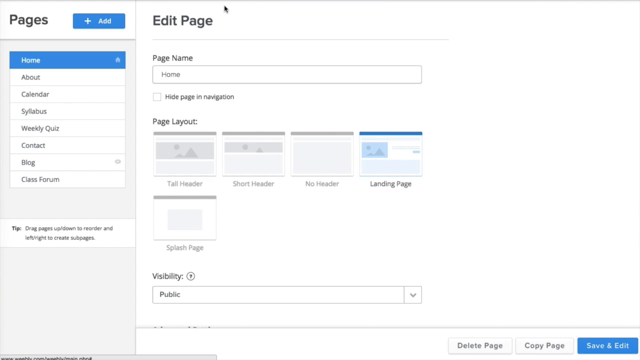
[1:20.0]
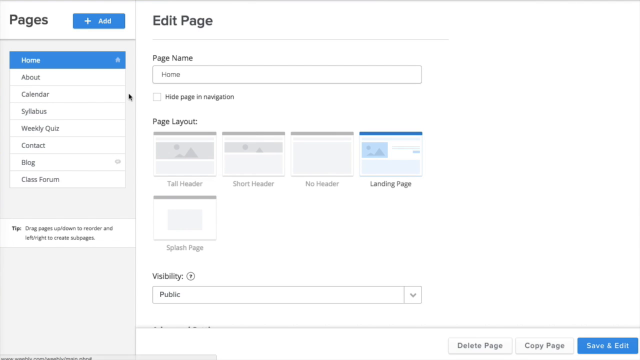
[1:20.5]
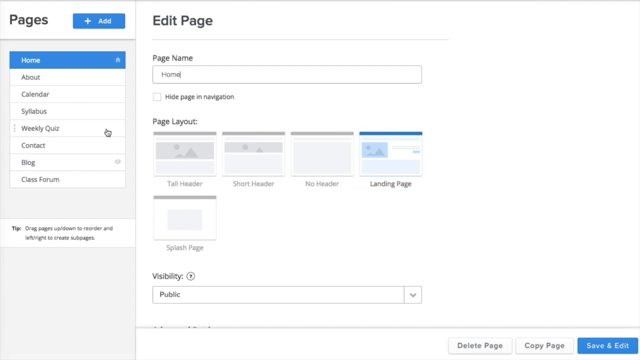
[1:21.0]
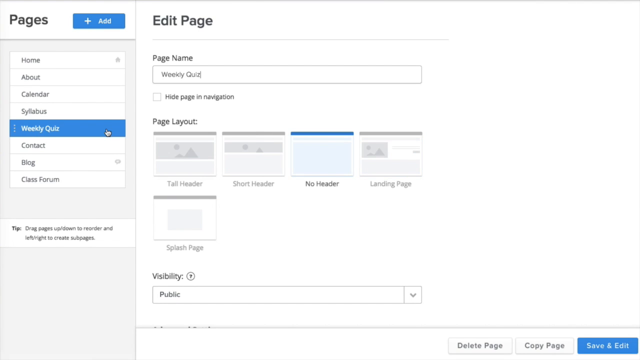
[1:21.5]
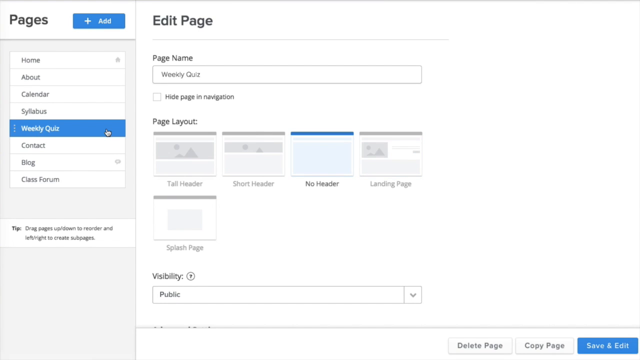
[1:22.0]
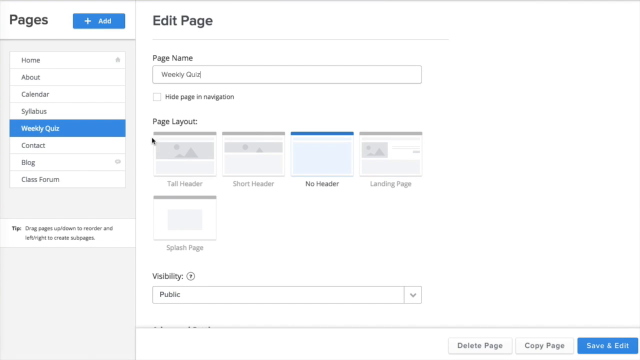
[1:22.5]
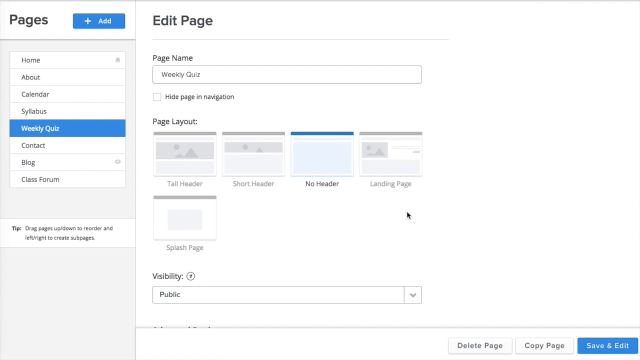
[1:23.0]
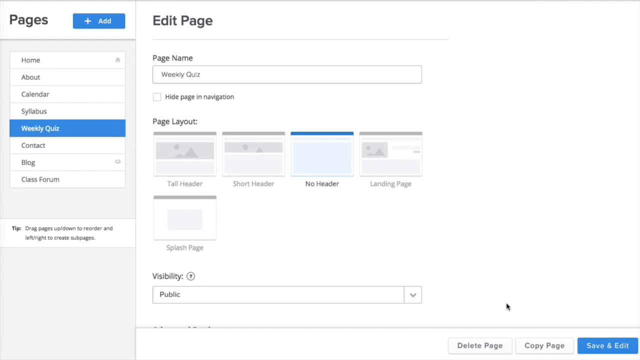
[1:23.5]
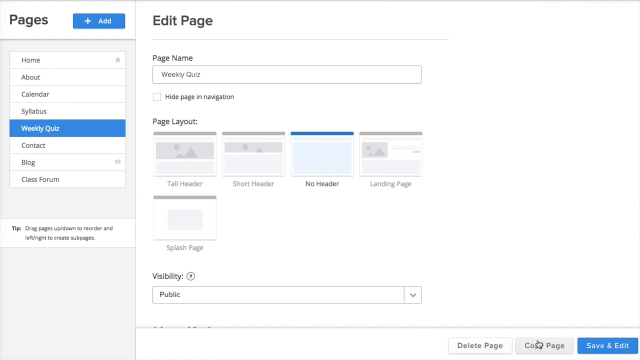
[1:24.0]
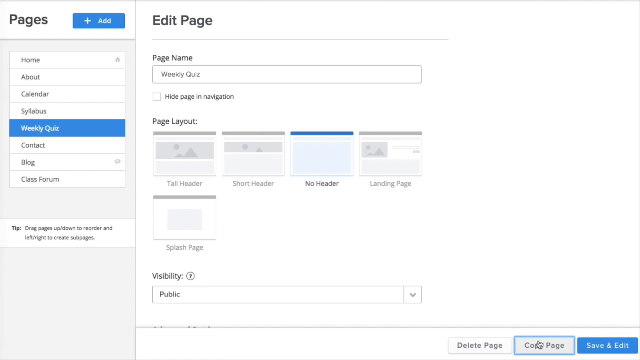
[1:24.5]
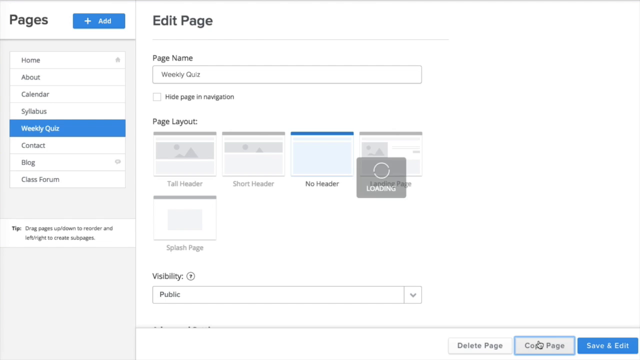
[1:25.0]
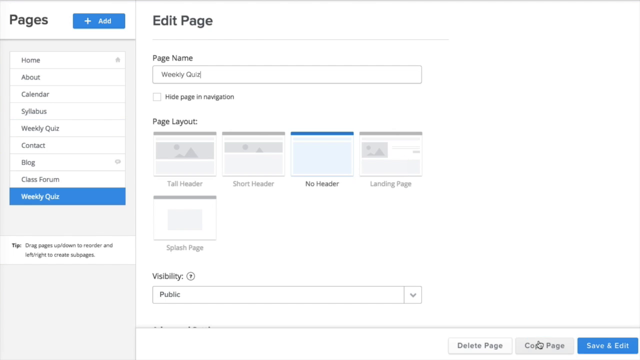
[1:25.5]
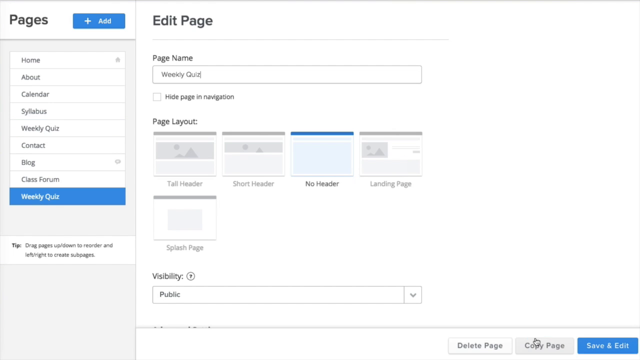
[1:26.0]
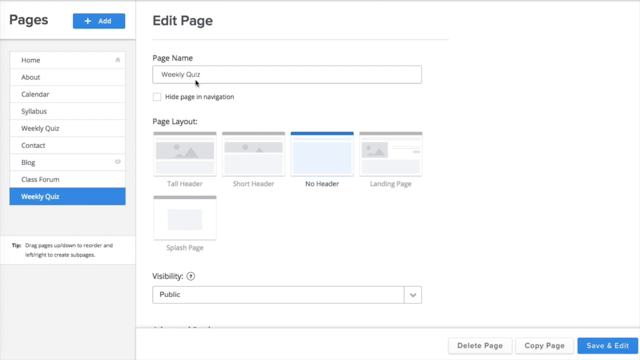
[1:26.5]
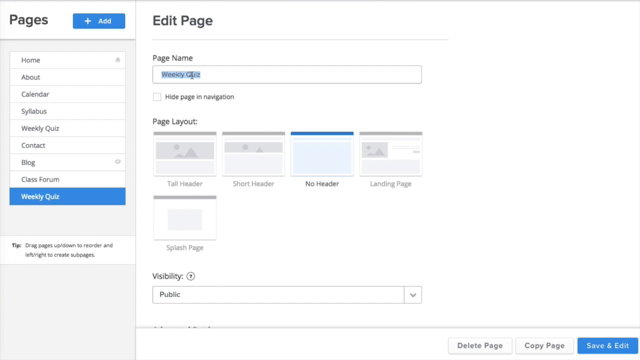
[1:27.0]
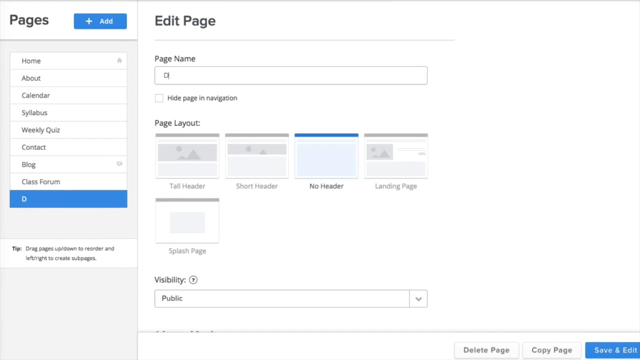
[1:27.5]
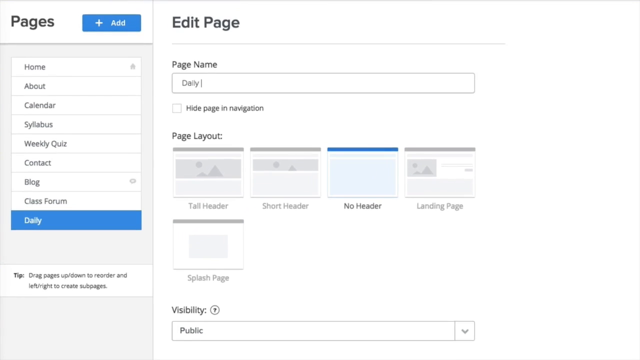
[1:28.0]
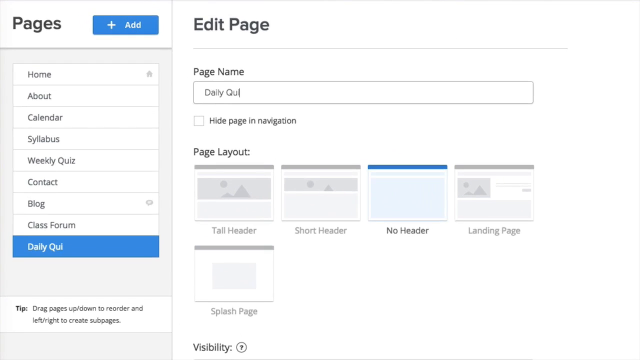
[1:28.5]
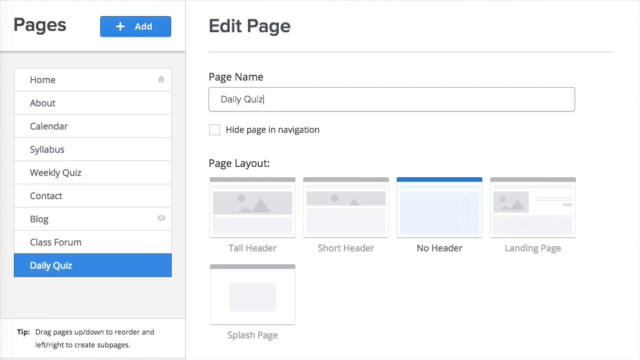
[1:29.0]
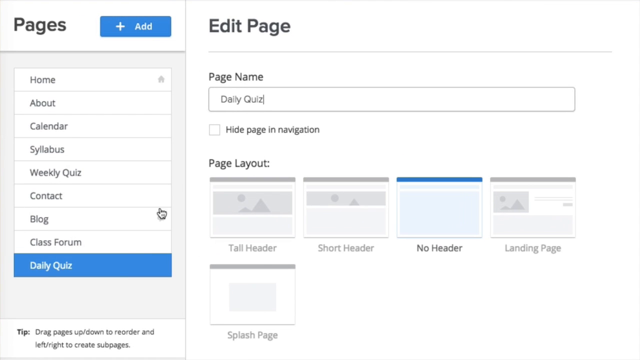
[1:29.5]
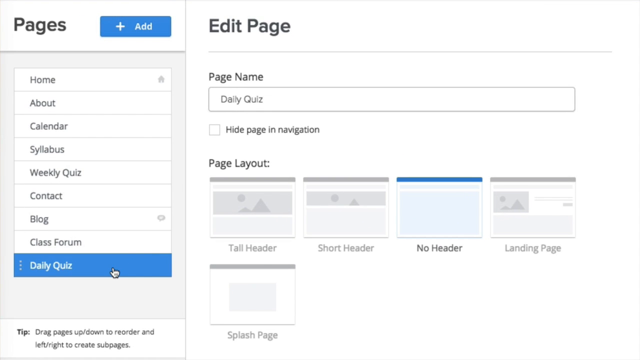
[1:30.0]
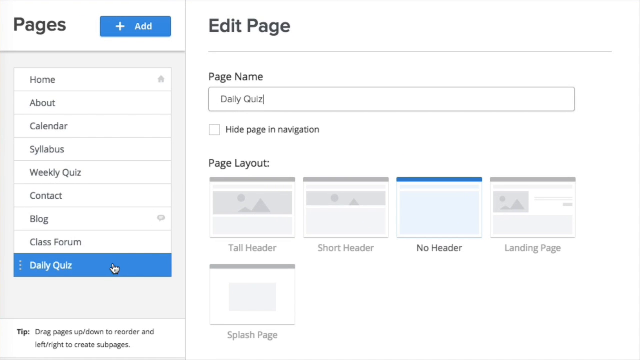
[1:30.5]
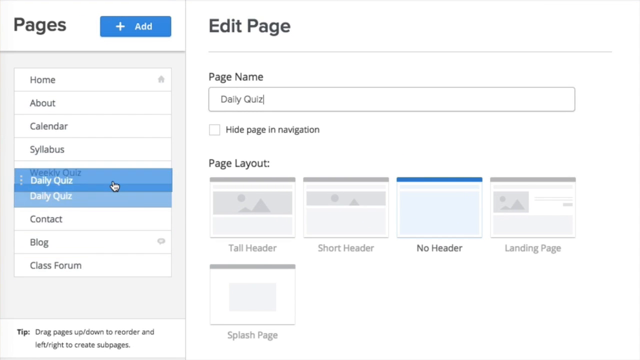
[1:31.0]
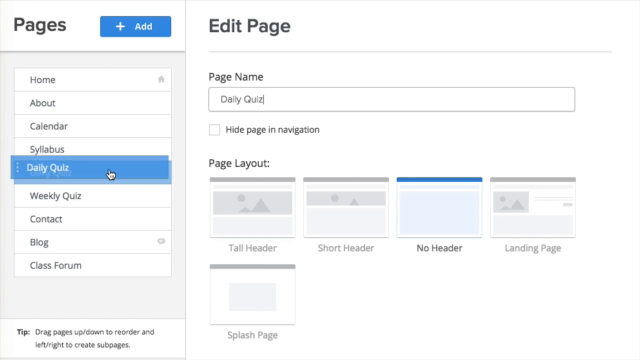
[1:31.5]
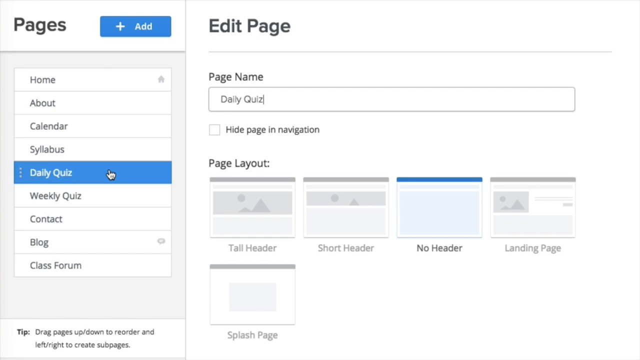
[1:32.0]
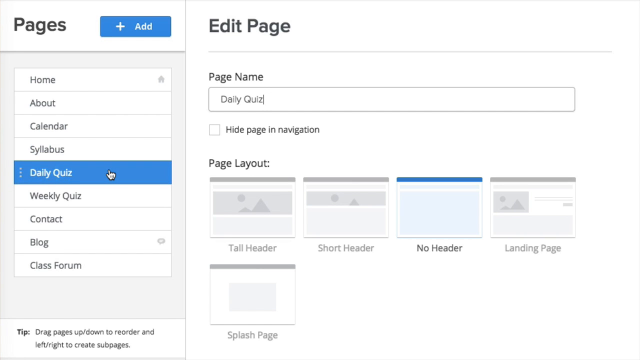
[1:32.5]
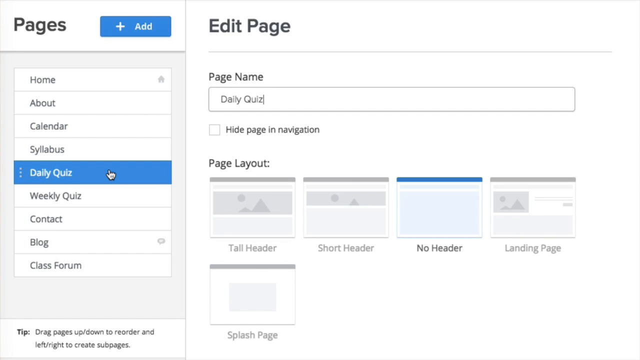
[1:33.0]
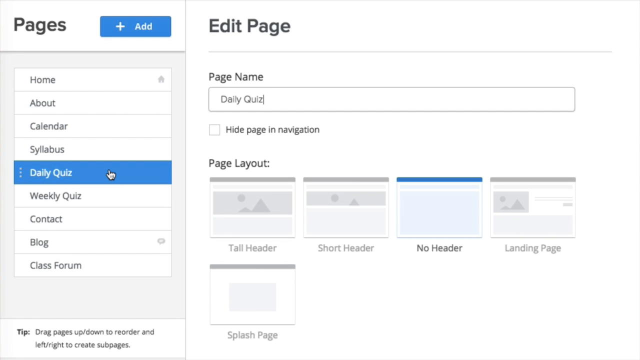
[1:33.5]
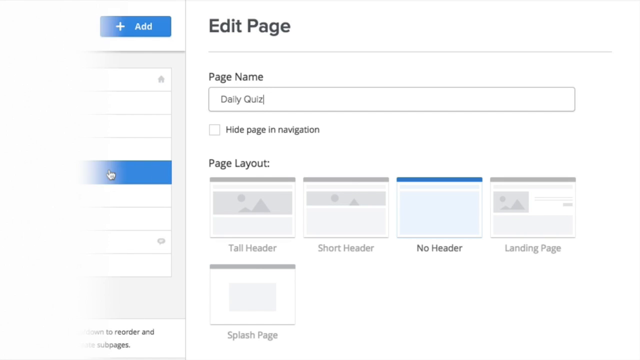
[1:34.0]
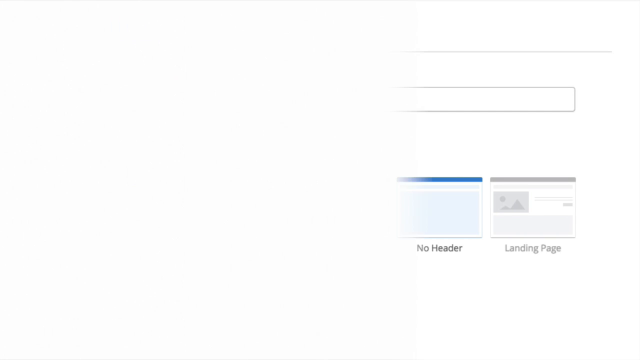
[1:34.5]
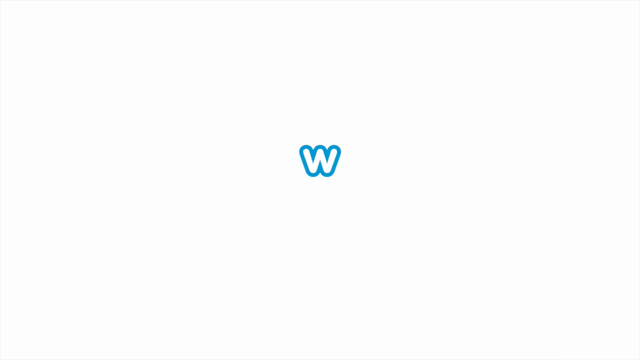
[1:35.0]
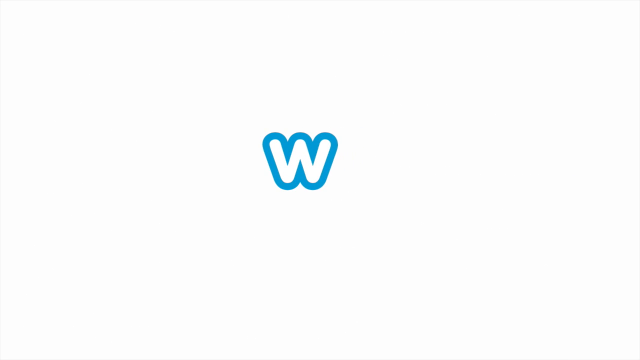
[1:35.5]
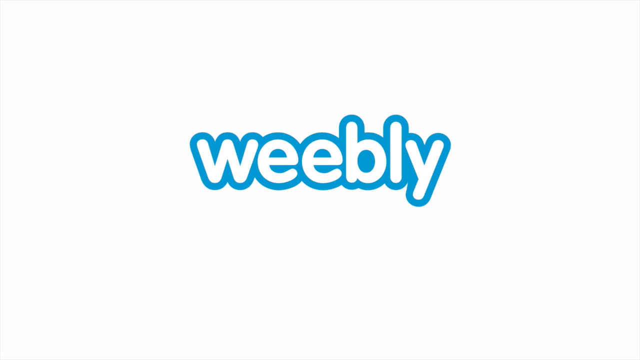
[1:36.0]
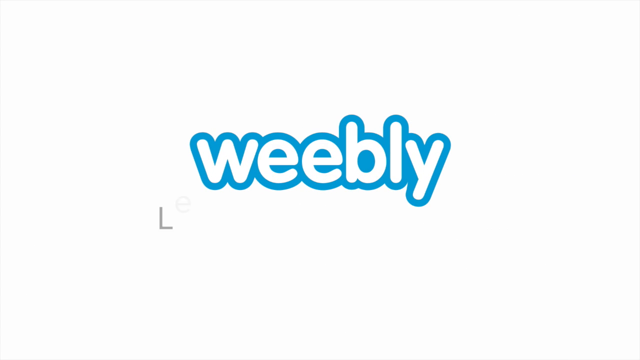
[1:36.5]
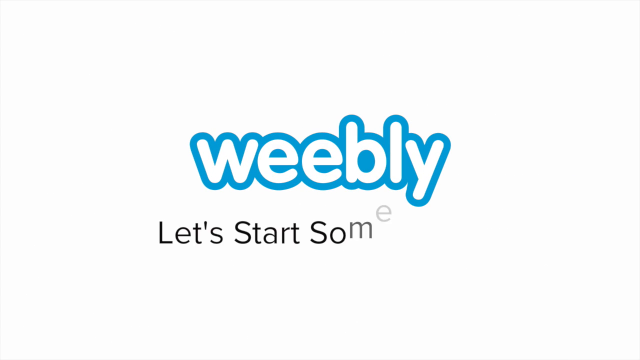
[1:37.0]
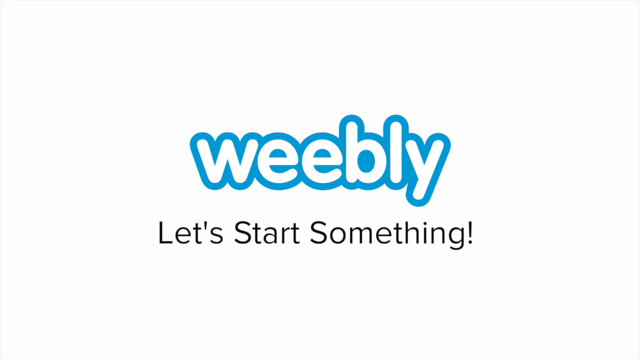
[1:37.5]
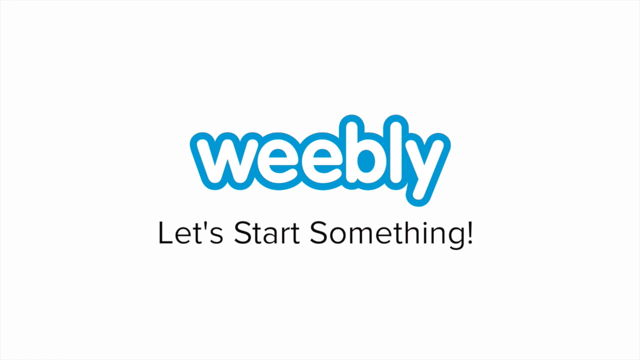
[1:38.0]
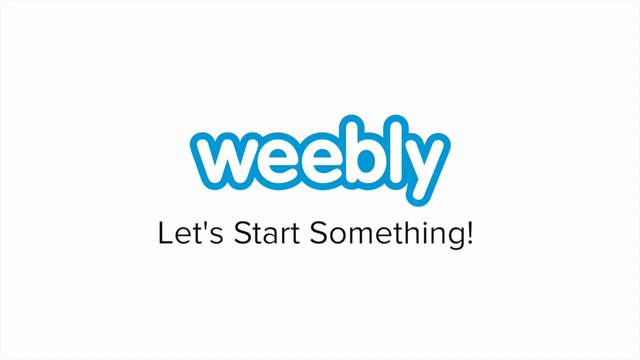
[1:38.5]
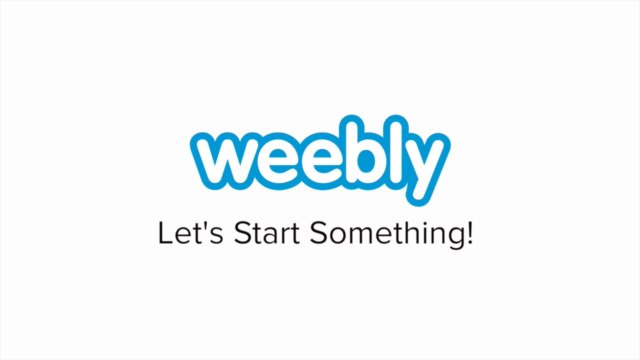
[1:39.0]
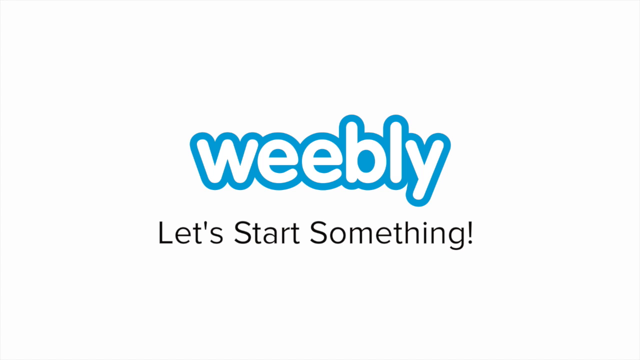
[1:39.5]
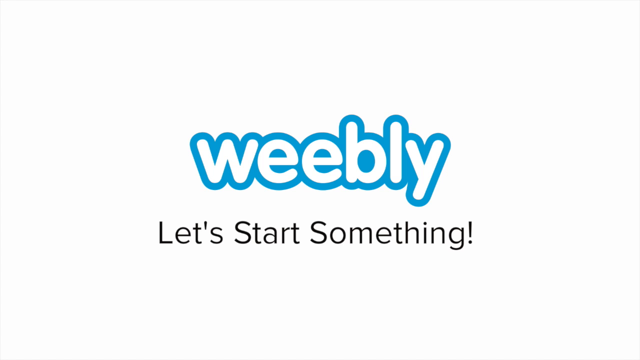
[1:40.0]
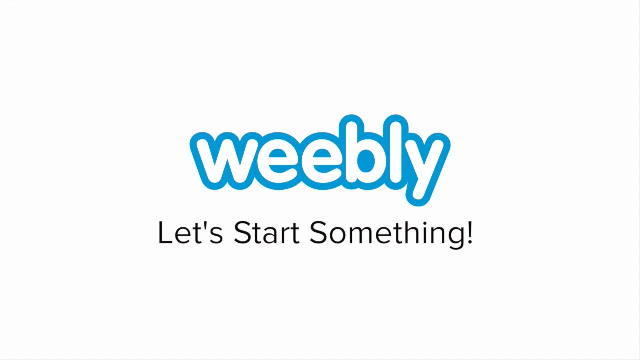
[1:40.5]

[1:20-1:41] A menu shows daily quiz, contact, blog, class forum, about and other items. On an edit page there is a first page name field and three or four parts to complete the assignment. Something is dragged to daily quiz and the page clears. A name, "daily quiz", is typed, the quiz is ticked, and the page is submitted.